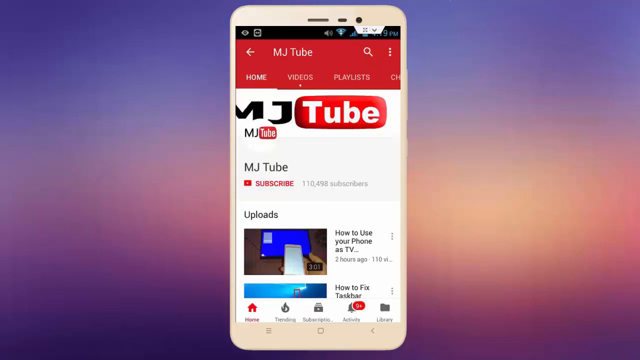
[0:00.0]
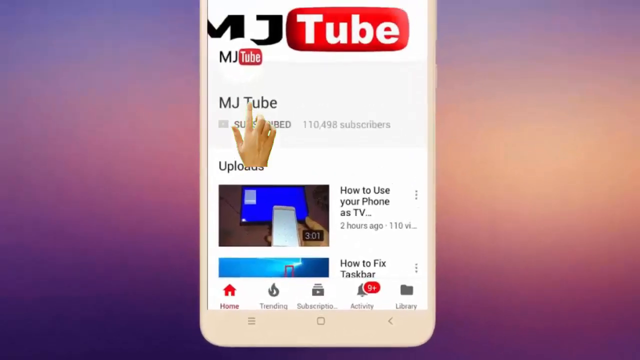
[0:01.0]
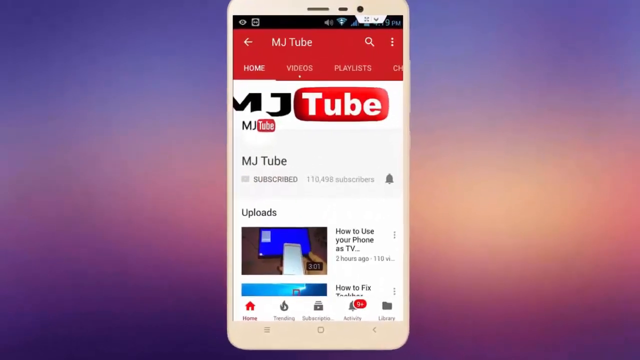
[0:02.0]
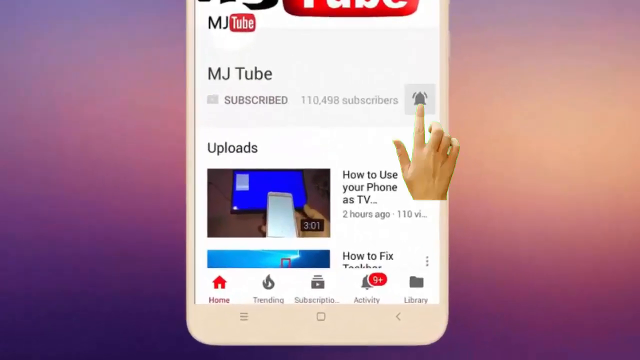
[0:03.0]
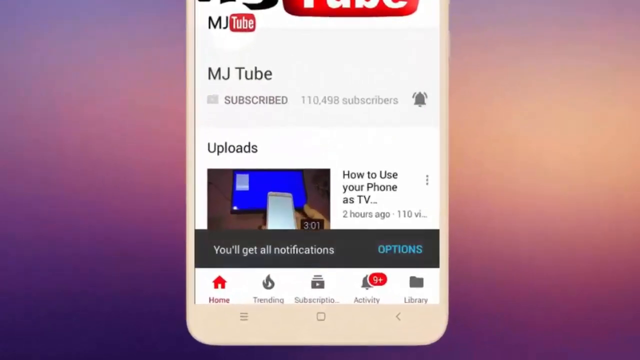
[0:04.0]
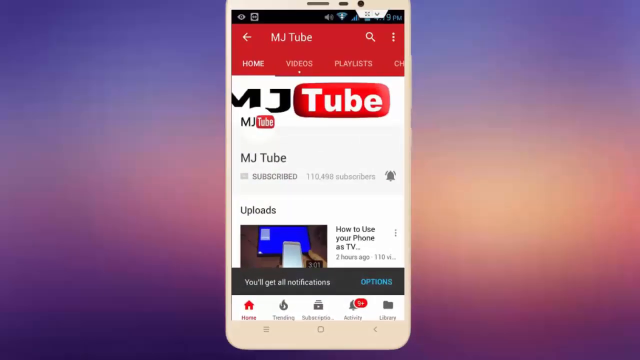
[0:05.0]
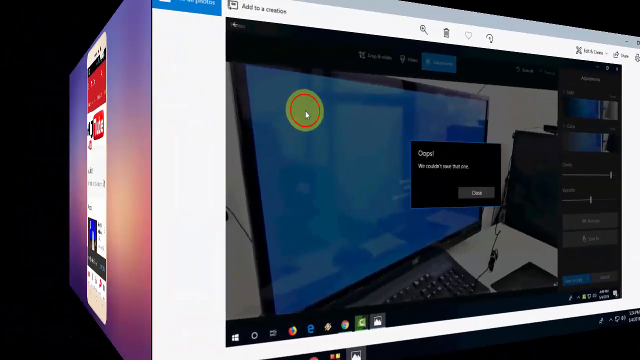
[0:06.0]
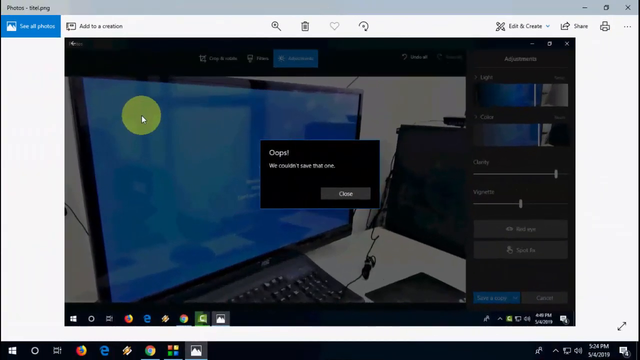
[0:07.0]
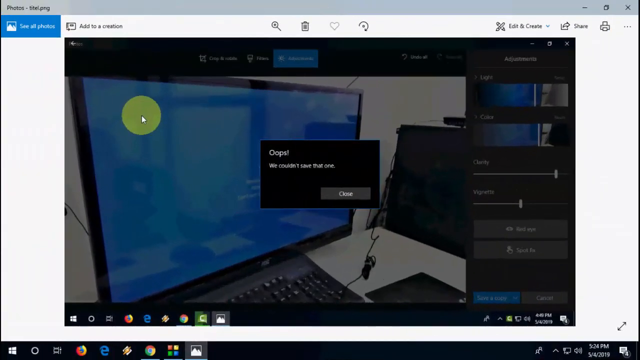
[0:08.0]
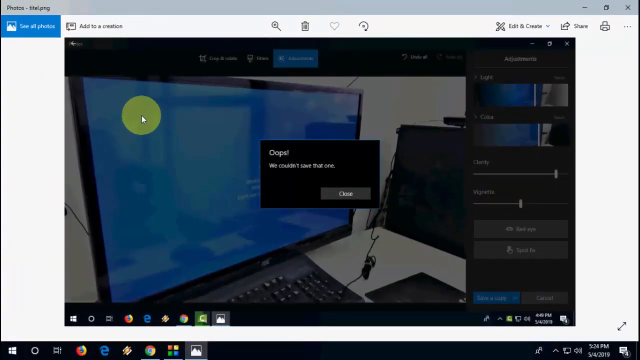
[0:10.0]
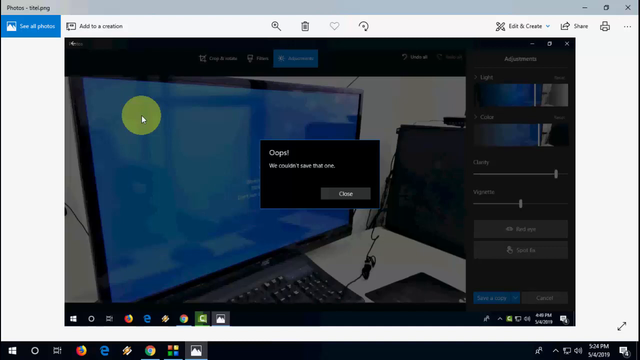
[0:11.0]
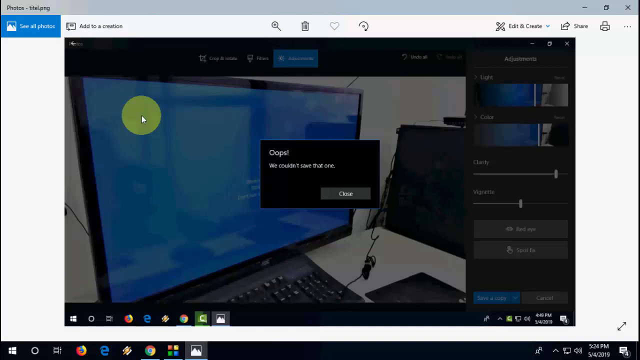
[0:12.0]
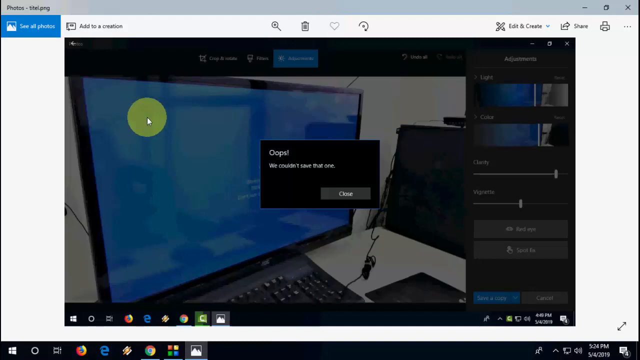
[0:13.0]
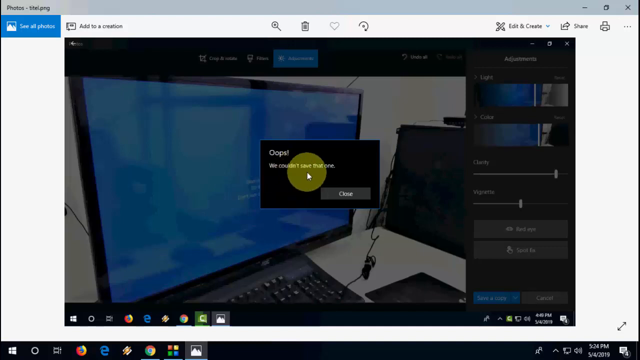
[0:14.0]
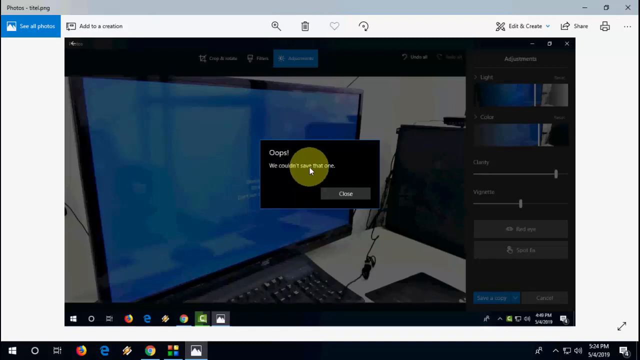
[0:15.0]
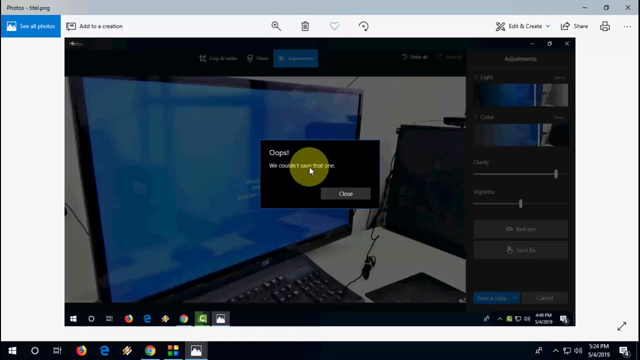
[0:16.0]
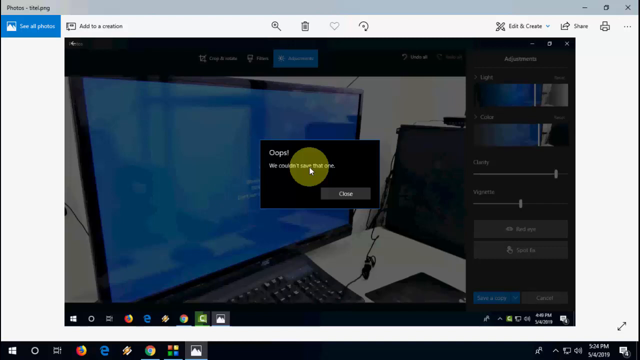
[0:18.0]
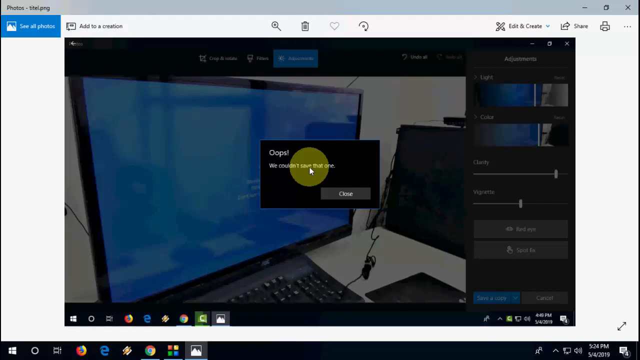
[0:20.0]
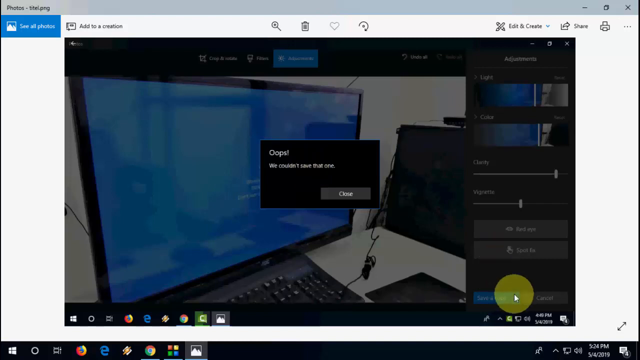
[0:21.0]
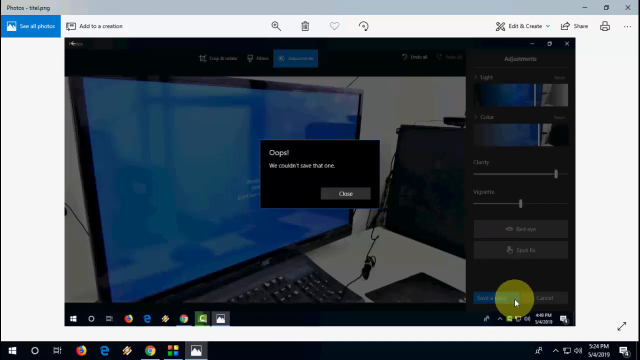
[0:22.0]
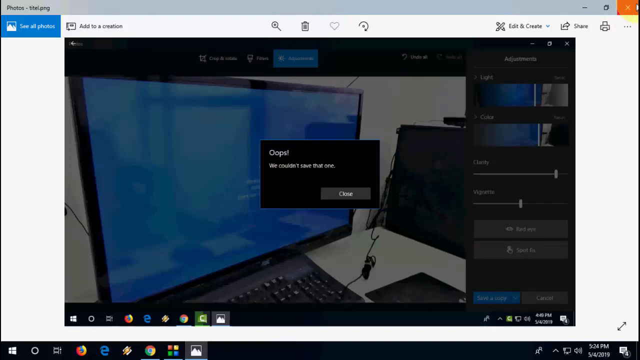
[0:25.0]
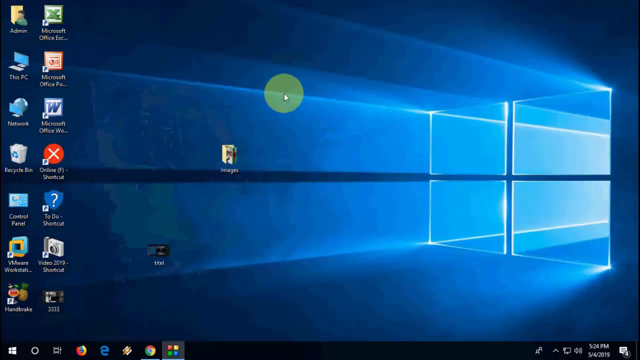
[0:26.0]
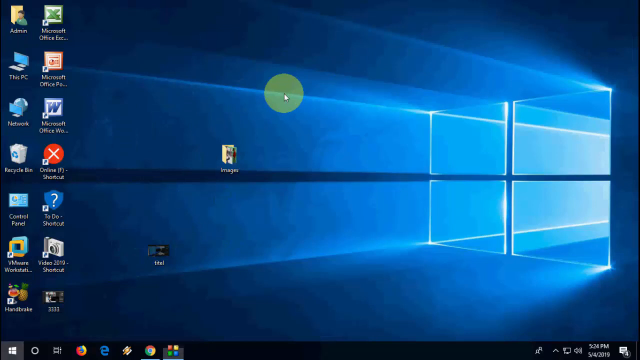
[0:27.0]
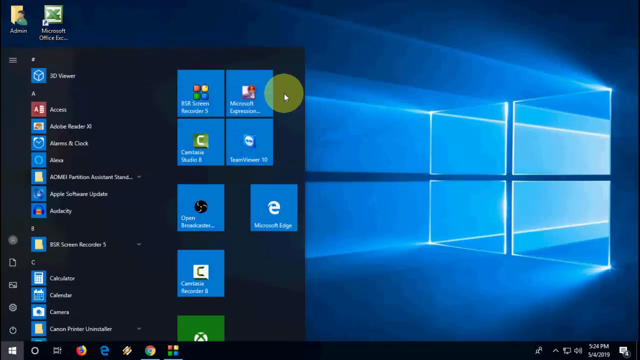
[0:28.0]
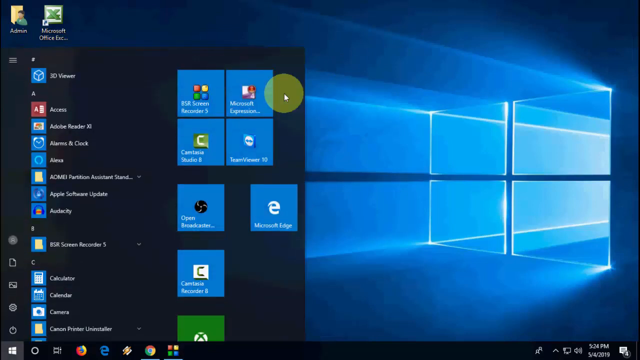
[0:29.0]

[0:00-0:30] An animated white smartphone with white bezels is mirrored on a computer screen, with a blue and orange color gradient on the left and right of the mirrored video. The phone has a YouTube channel open, named MJtube, with 110,498 subscribers. The first video is titled "how to use your phone's TV remote" and the second "how to fix a spark". Five buttons run along the bottom of the app: home, trending, subscription, activity and library. The video zooms in and an animated hand presses the subscribe button, which changes to subscribed. The video zooms in again, the hand touches the notification button, and a pop-up appears at the bottom reading "you will get all notifications". A screenshot then appears with the text "oops, couldn't save that one" and a close button. The mouse cursor hovers over the pop-up, then moves to the top right and closes the screenshot by pressing the red X.